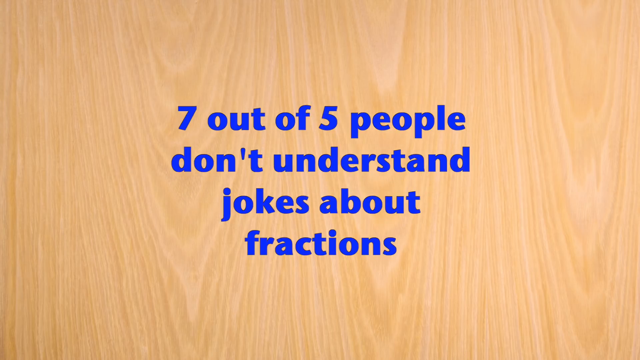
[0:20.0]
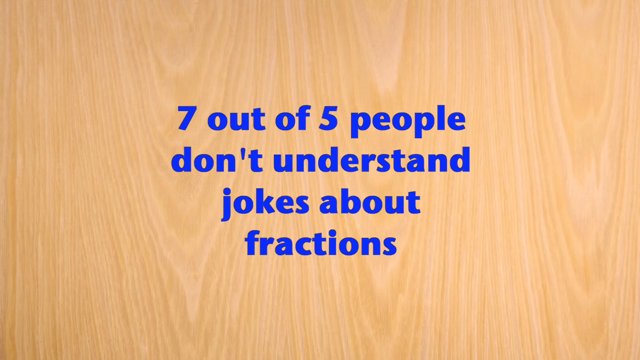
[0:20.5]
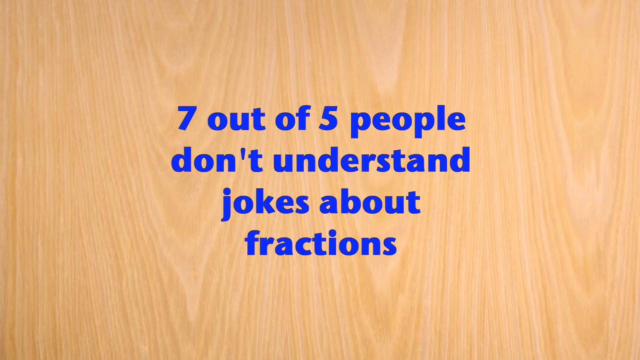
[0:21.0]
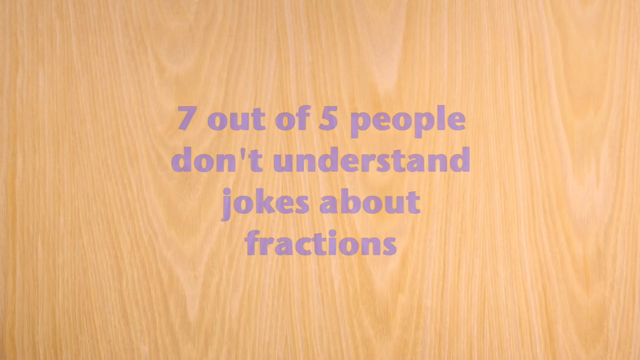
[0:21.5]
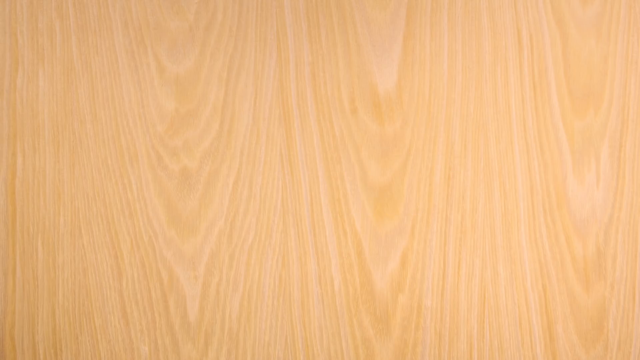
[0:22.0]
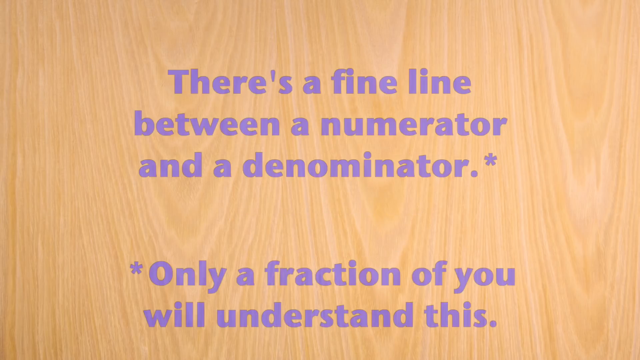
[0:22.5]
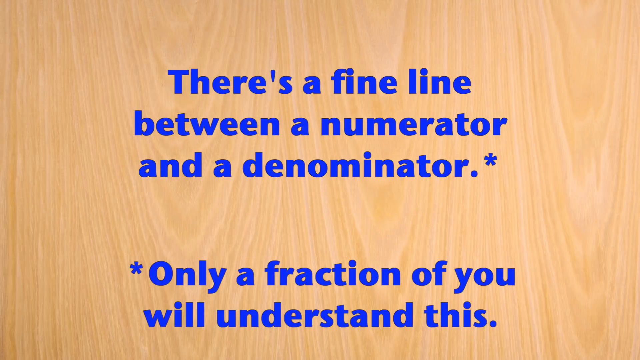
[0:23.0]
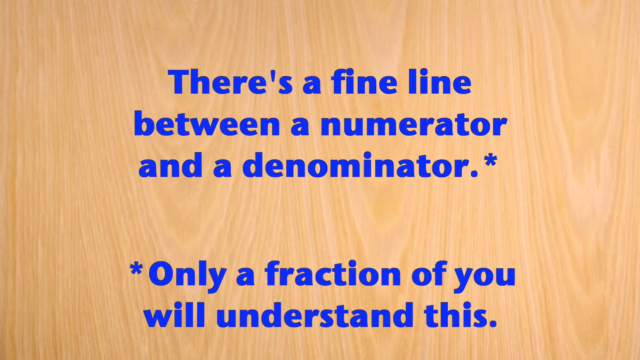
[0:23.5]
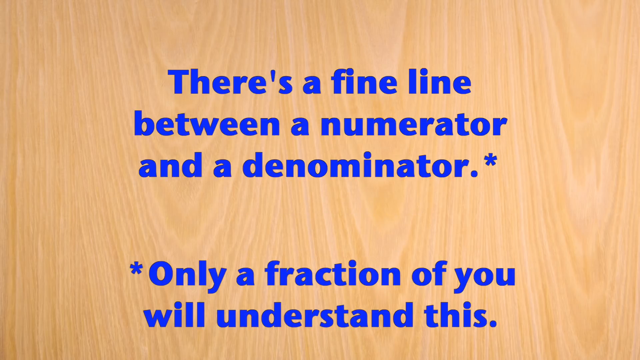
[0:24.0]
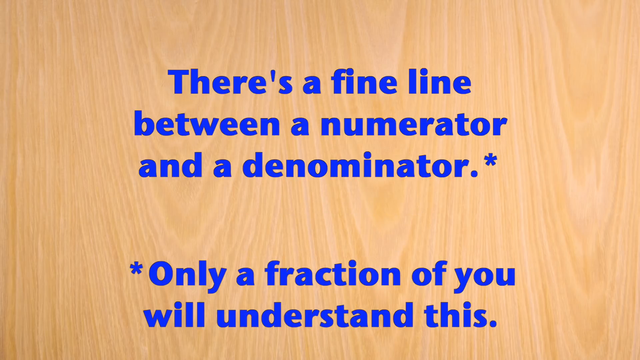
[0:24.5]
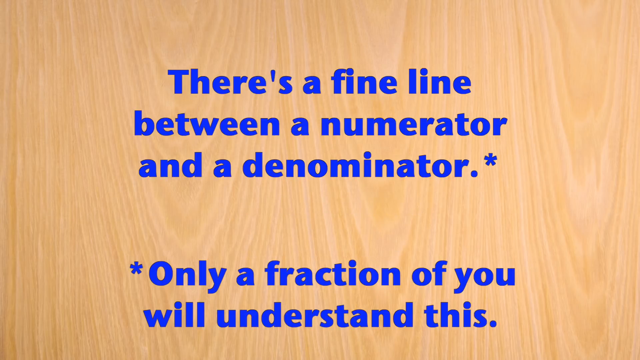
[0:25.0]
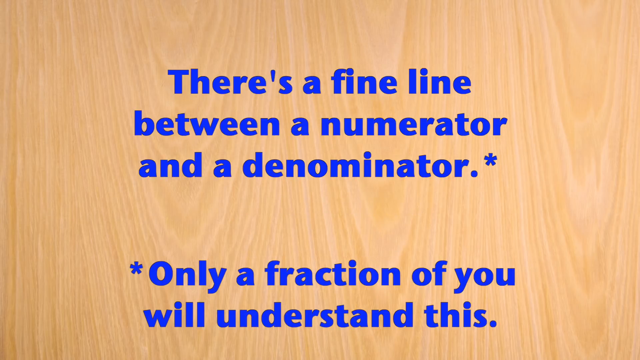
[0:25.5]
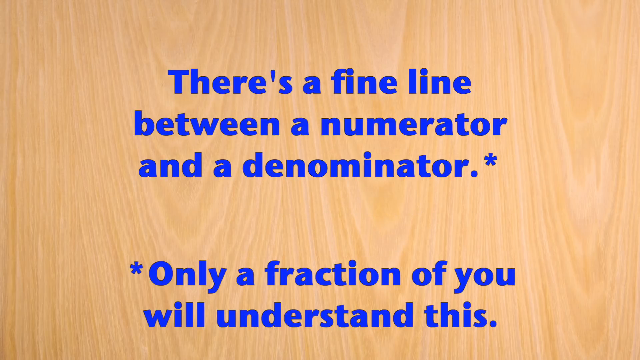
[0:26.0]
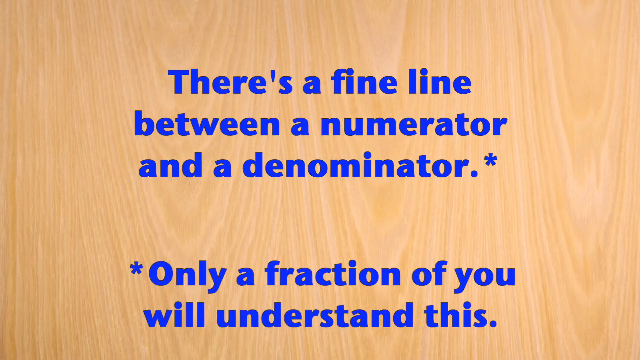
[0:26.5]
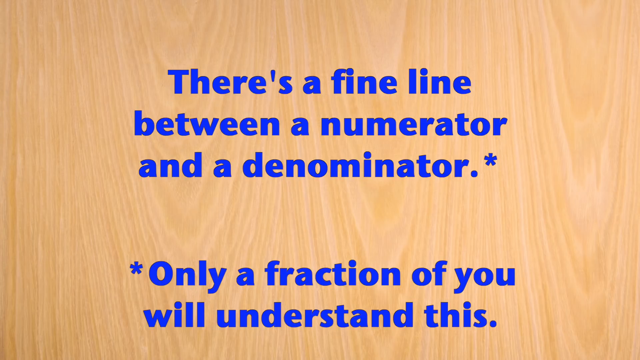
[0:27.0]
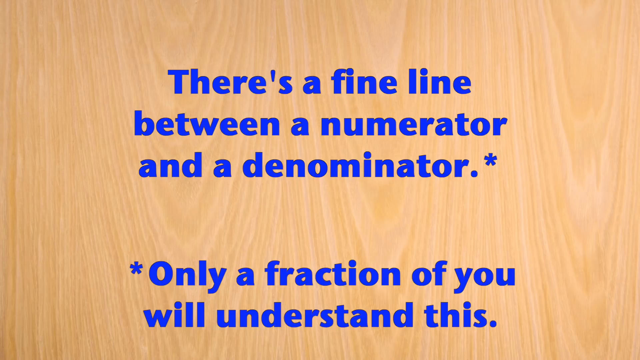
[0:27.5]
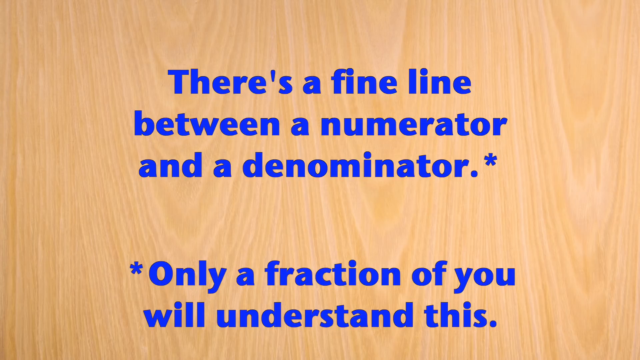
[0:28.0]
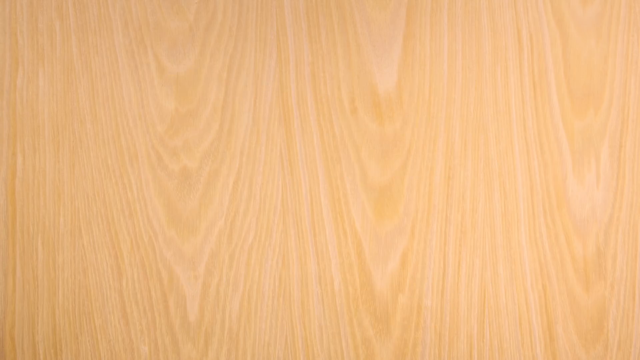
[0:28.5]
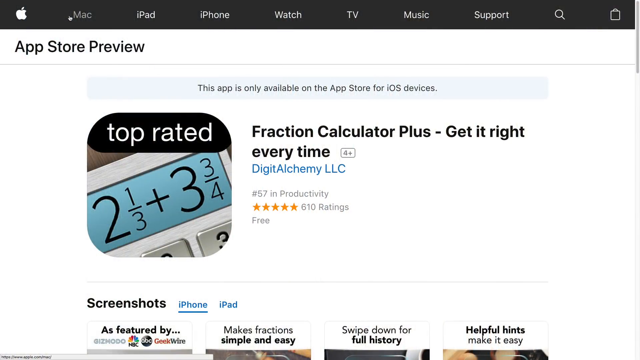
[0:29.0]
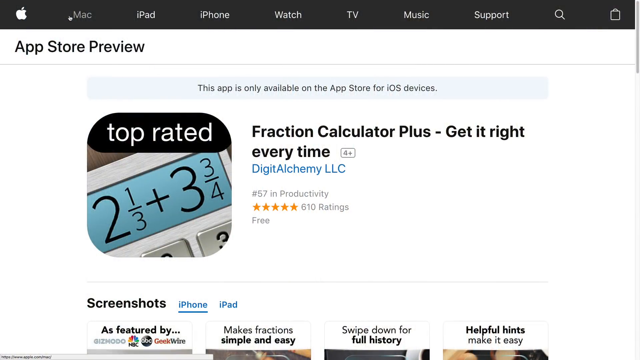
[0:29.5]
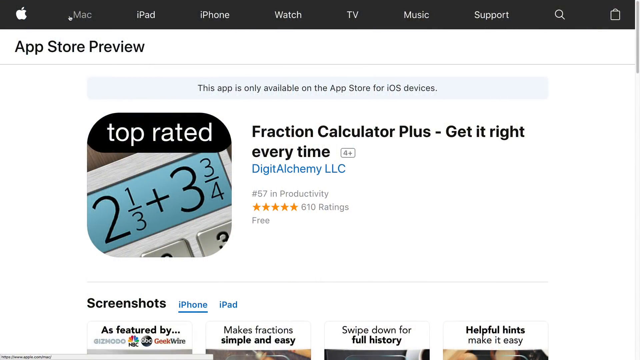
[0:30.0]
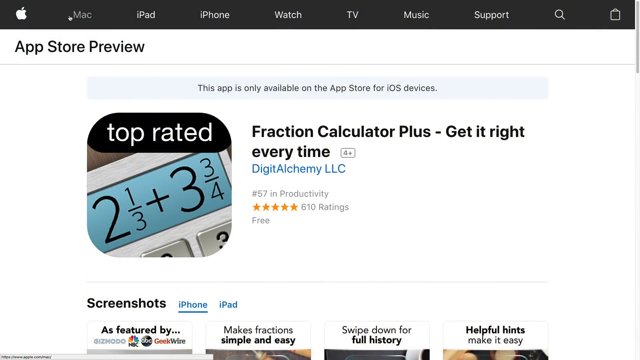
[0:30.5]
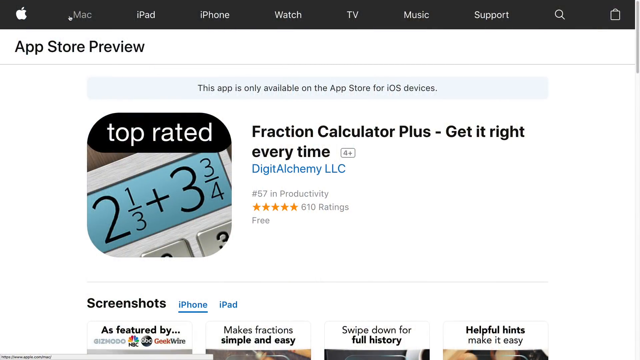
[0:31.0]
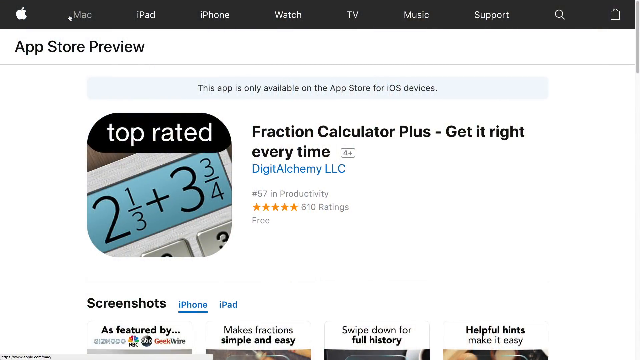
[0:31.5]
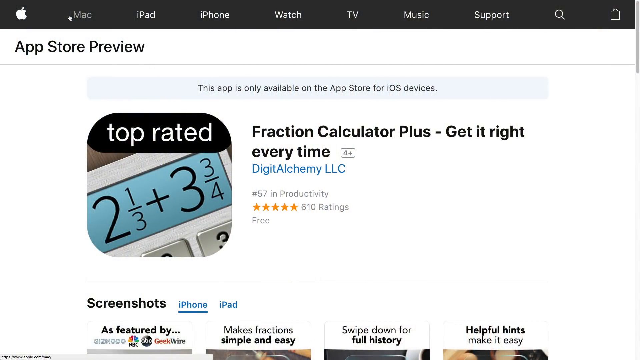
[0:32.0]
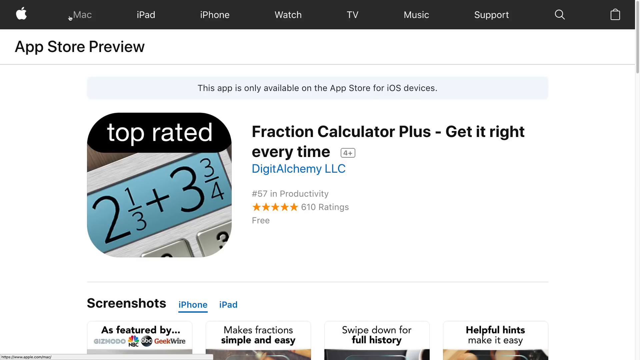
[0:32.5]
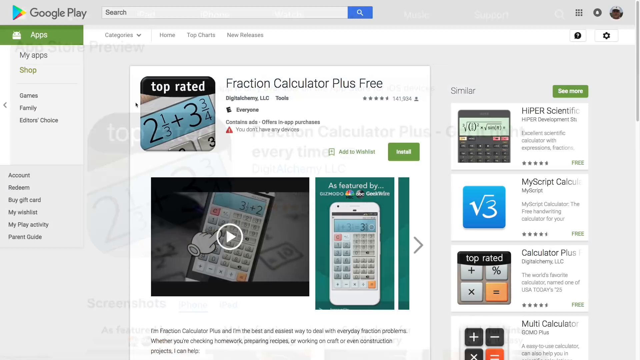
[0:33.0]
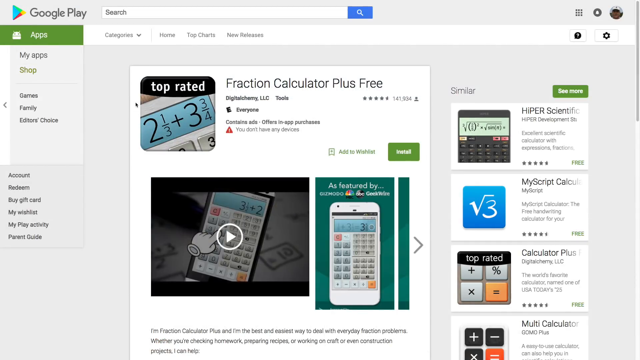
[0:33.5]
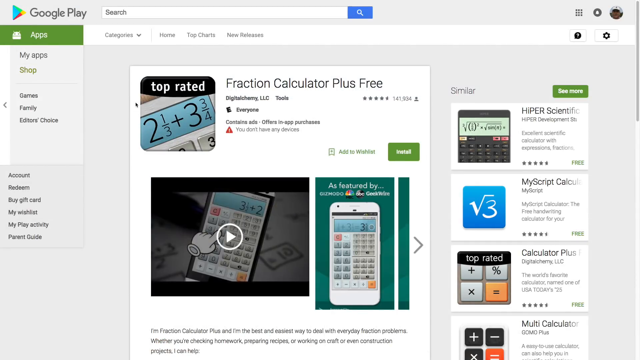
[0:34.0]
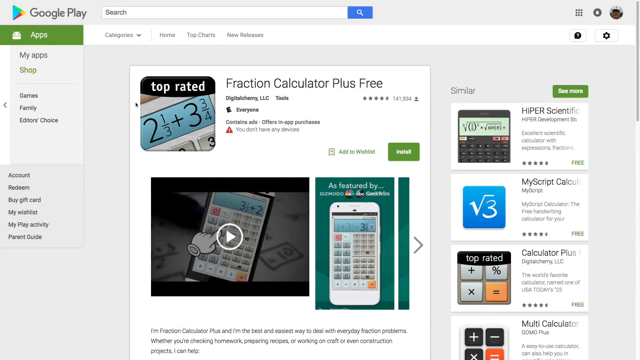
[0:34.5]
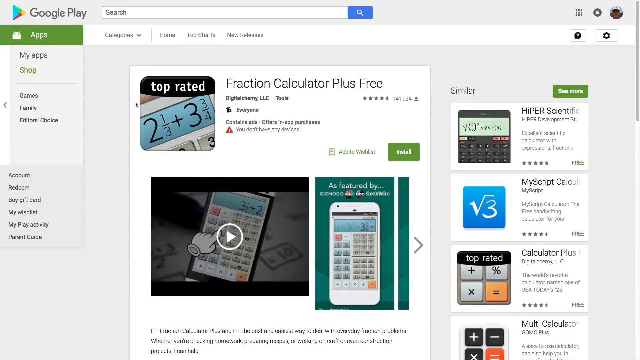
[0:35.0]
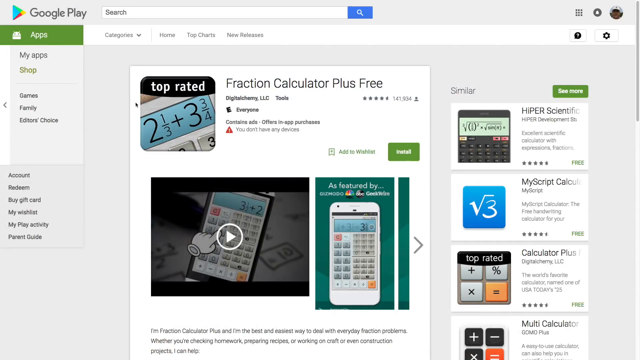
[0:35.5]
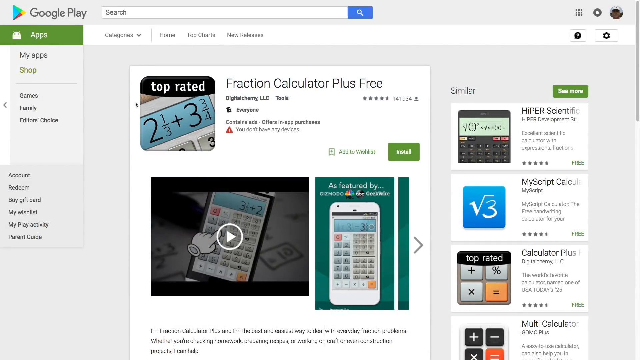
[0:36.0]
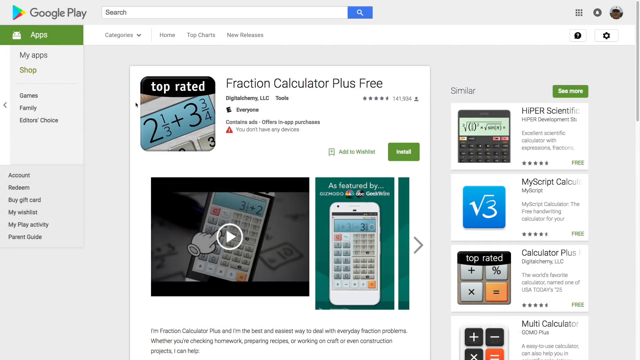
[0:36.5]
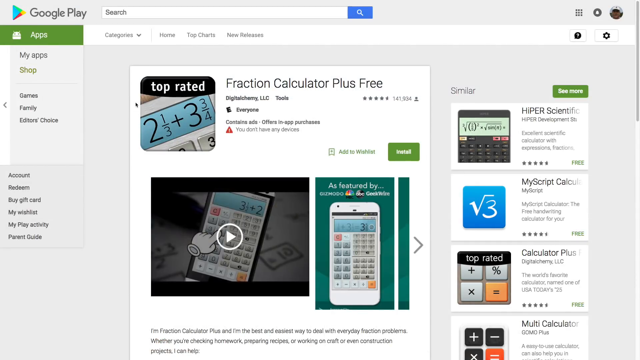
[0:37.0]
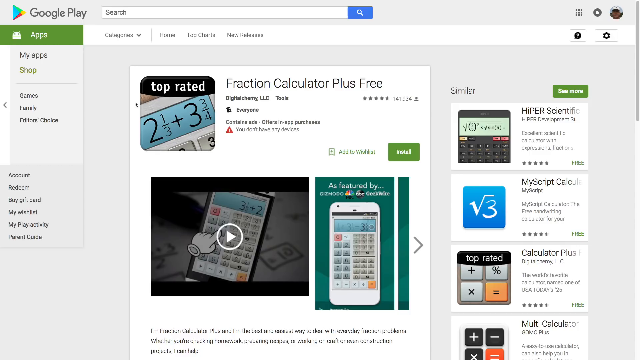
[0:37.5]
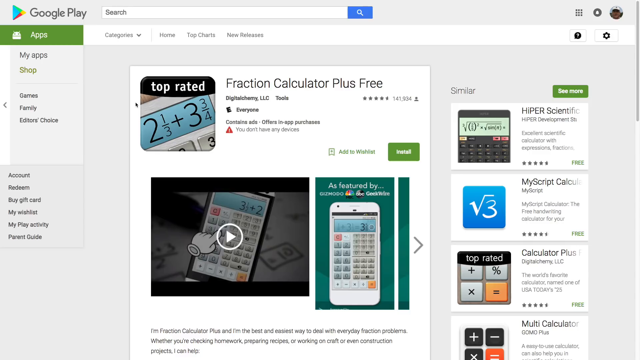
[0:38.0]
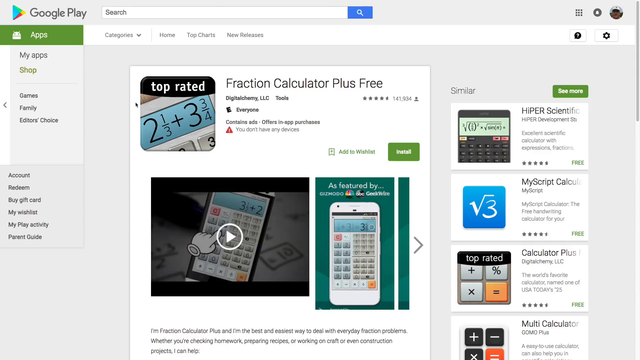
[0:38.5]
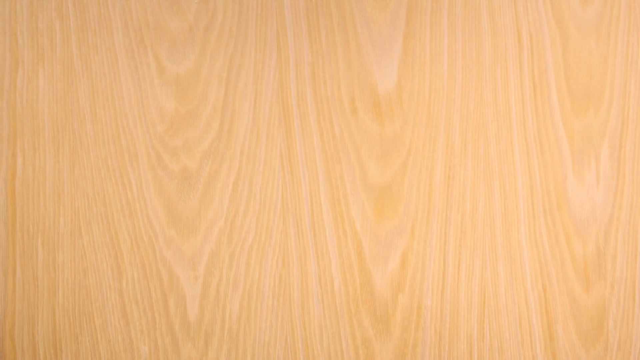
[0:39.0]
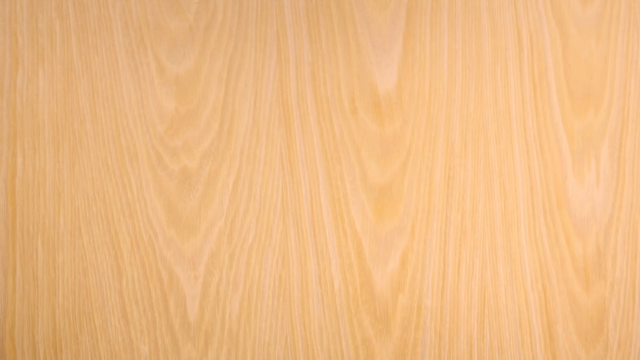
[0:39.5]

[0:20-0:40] The blonde wood background, with a distinct, slightly darker grain, fills the screen. Bold blue text reads "seven out of five people don't understand jokes about fractions." That text vanishes and new bold blue text appears: "There's a fine line between a numerator and a denominator," with a star after "denominator," and a star before the next sentence, "only a fraction of you will understand this." That text vanishes and a screenshot of an app in an app store appears, apparently the Apple App Store. The app is called "Fraction Calculator Plus, Get It Right Every Time" and is rated five stars with 610 ratings. A logo says "top-rated" with "two and one third plus three and three quarter." The screen then goes to Google Play, showing a demonstration that appears to be animated below the logo of the top-rated Fraction Calculator Plus, which is free.